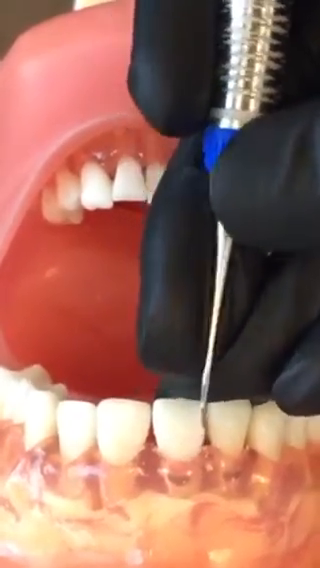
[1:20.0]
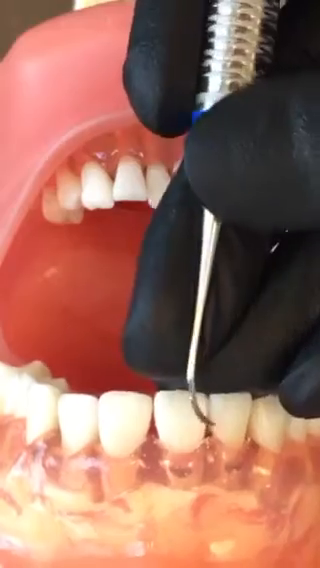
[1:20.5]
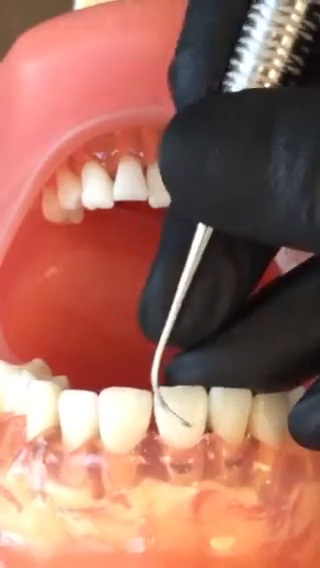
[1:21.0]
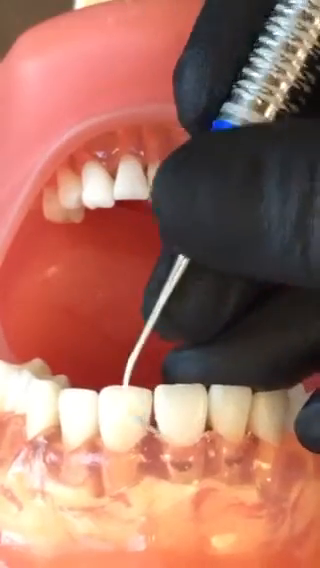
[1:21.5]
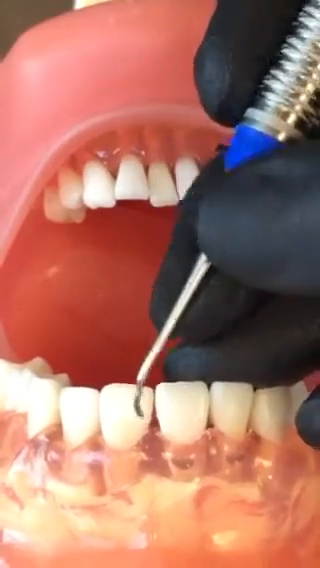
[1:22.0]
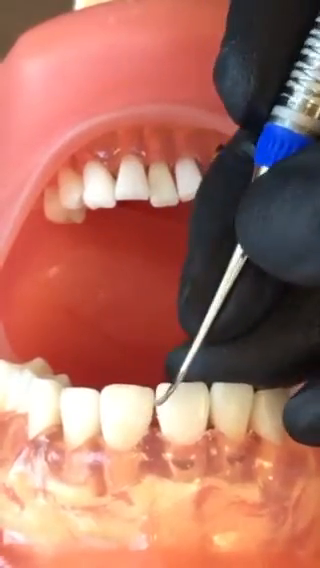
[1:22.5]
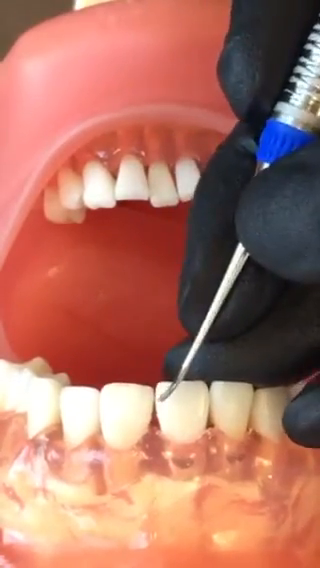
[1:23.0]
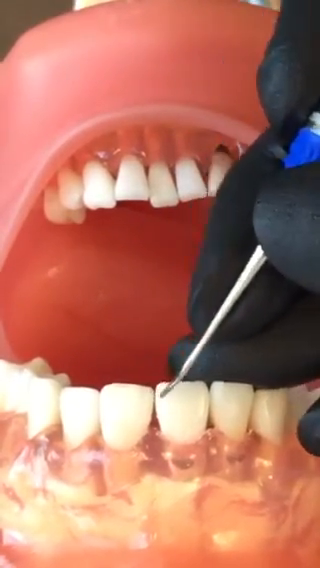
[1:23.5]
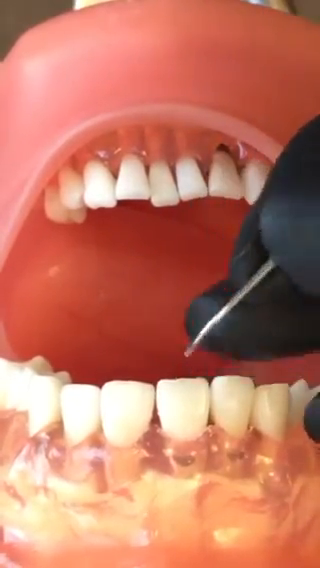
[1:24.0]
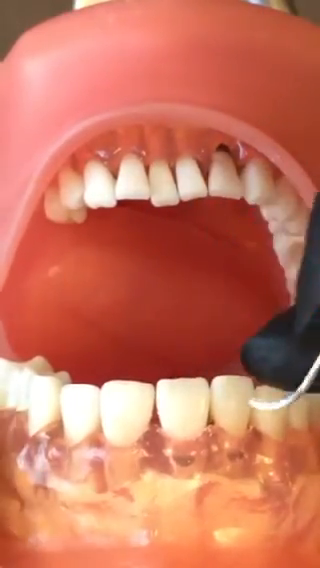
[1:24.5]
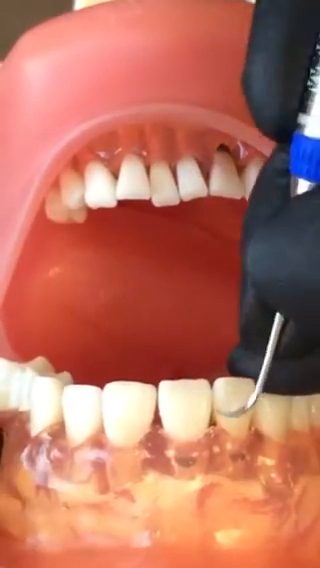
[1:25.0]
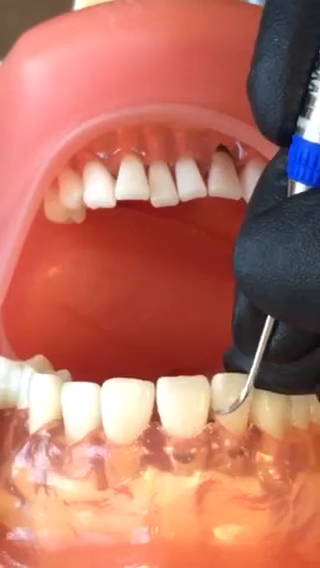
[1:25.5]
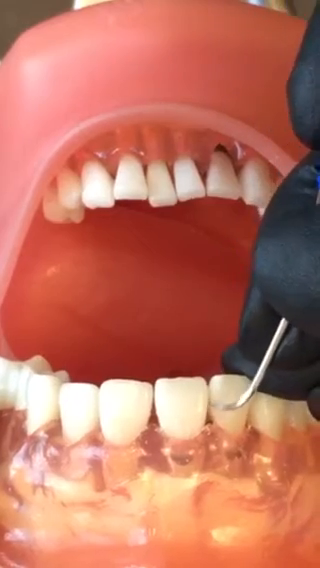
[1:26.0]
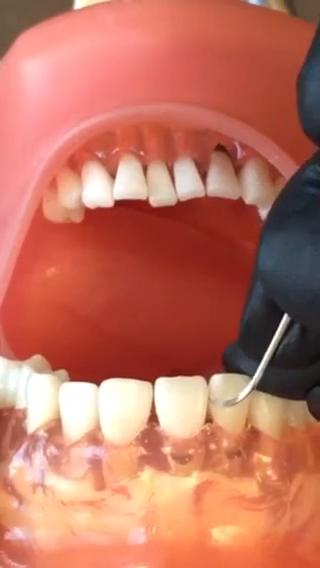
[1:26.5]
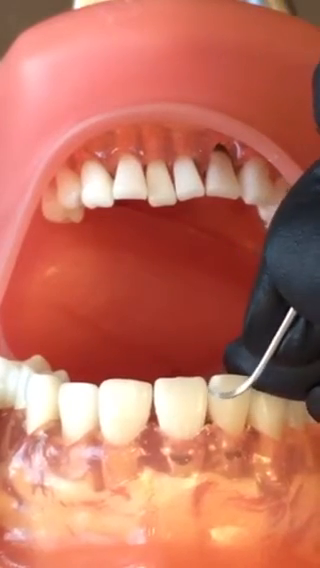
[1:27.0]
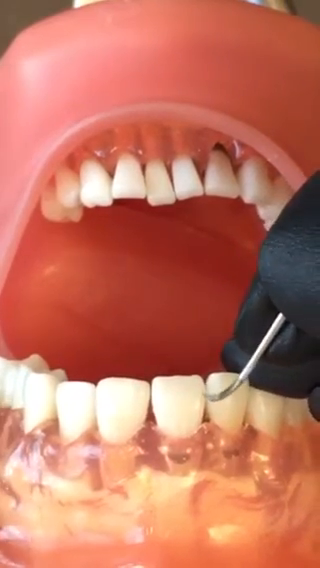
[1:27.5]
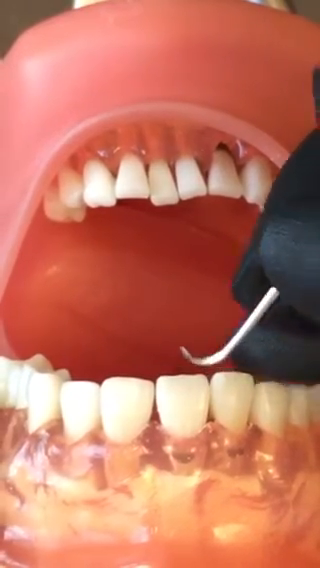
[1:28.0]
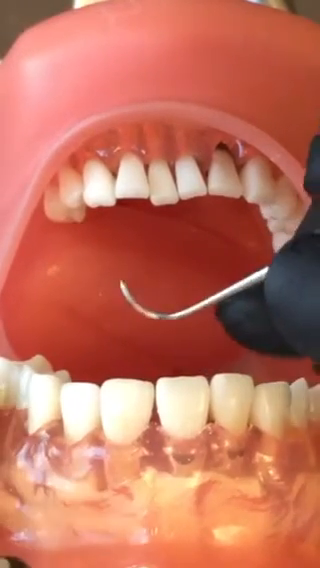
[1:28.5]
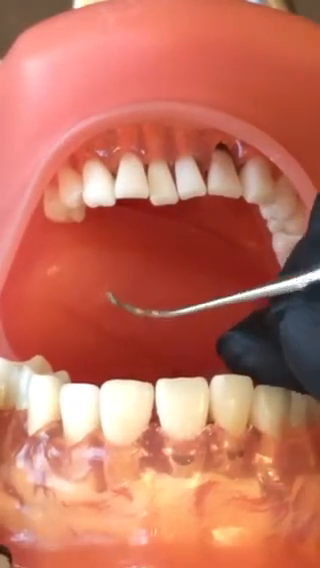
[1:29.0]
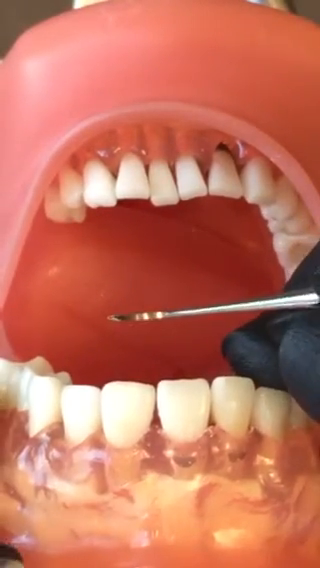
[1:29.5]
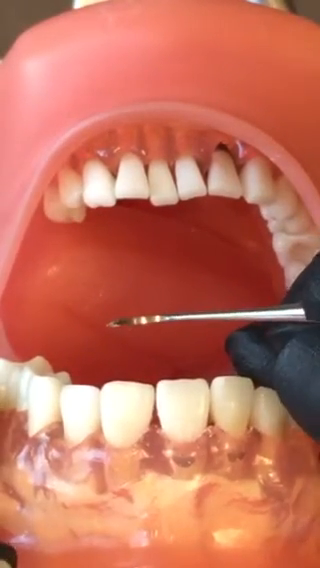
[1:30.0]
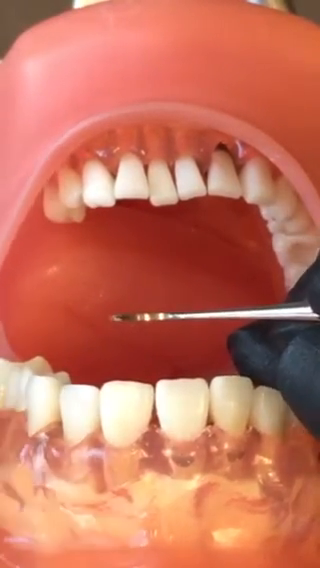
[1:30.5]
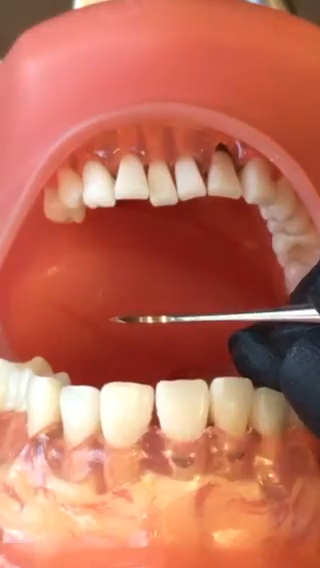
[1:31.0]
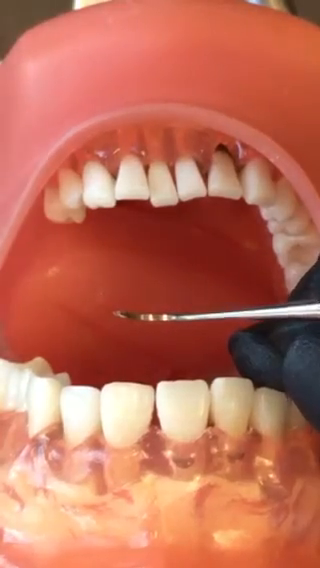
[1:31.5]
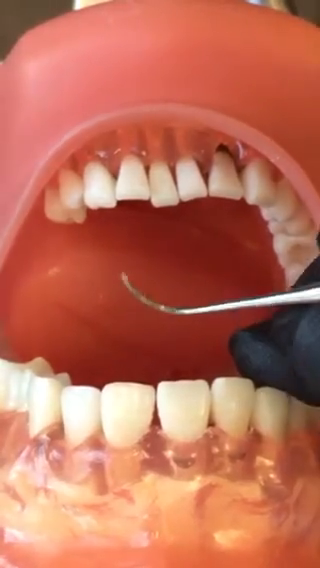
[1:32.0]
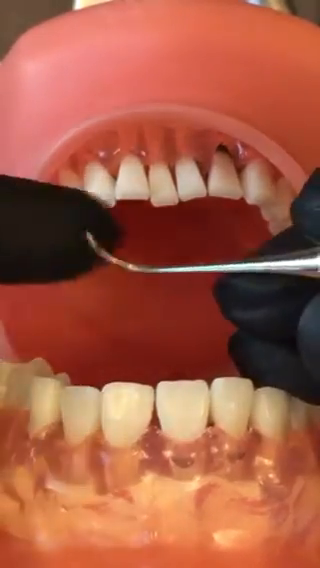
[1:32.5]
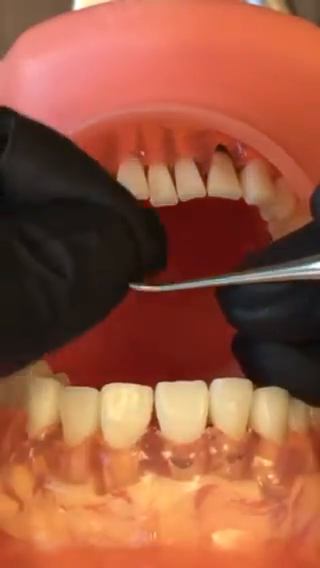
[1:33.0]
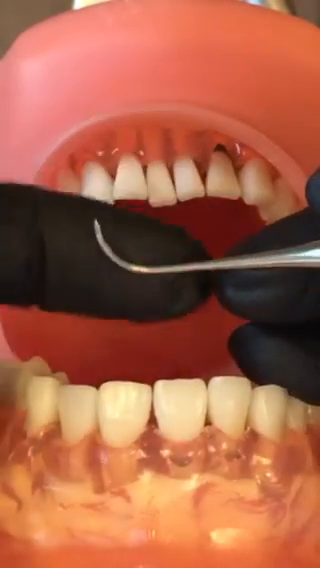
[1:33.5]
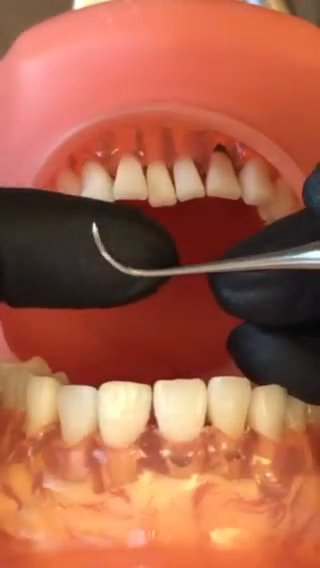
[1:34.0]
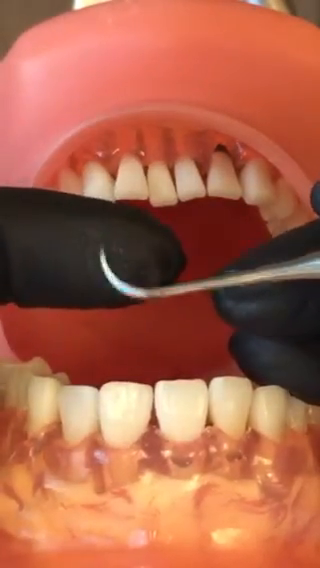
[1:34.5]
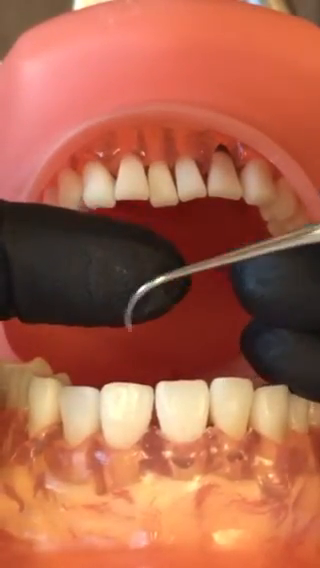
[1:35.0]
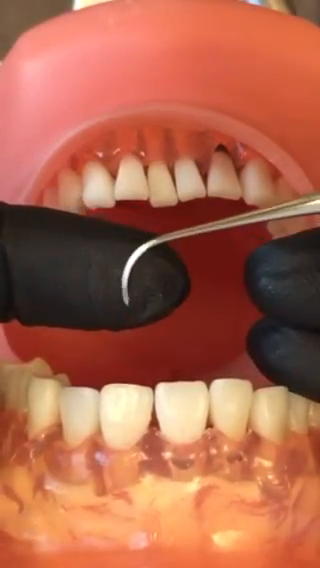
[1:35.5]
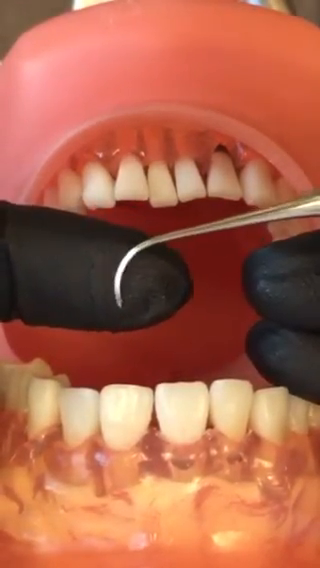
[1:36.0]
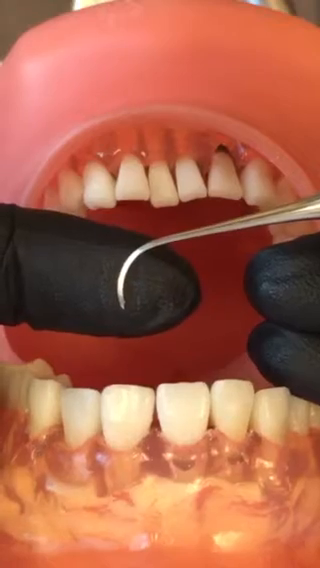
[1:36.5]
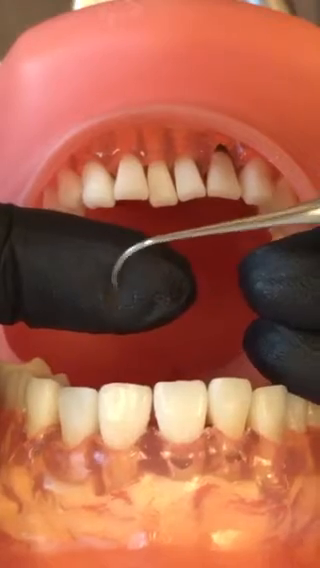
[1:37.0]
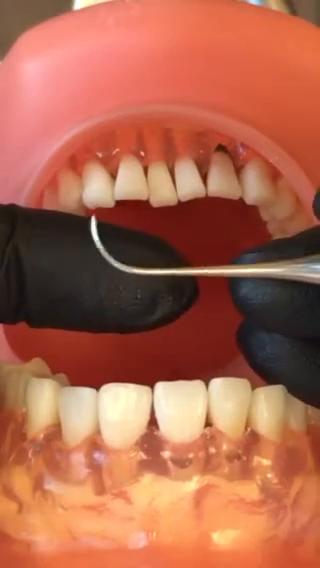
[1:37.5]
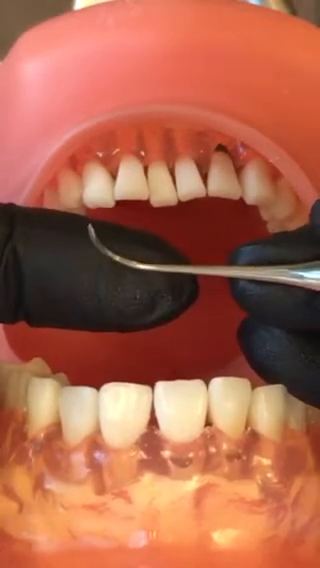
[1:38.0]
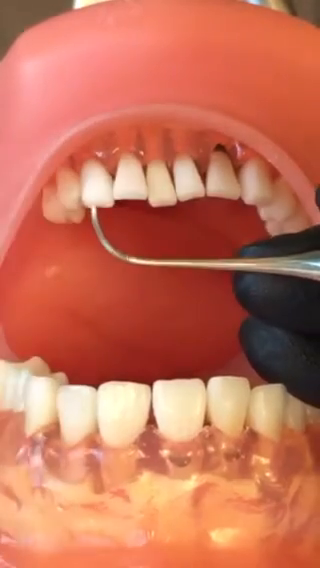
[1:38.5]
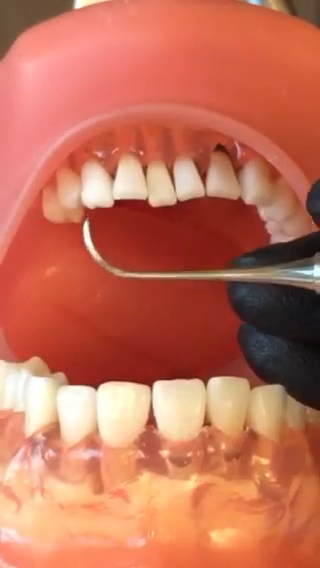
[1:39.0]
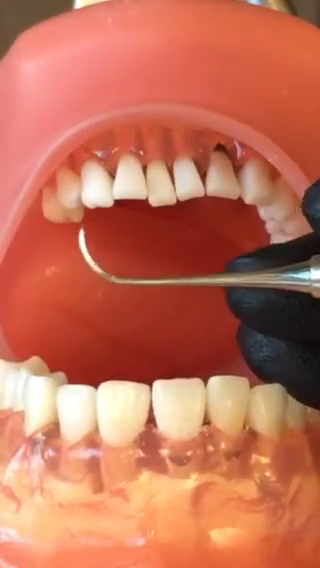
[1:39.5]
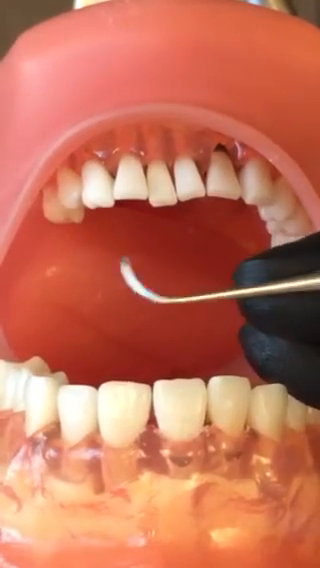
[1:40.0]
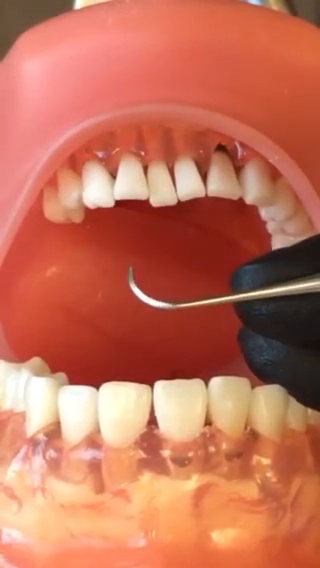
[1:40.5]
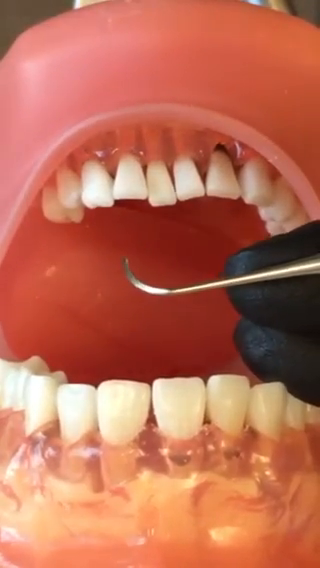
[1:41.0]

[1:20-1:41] The scraping tool is turned over and cleans the gap between the teeth. It is then turned over horizontally. With the other hand, the user cleans the tip of the hook and places a finger behind the hook, apparently to point something out about it. The tool is flipped over again so the hook points downward in a horizontal orientation, with the finger still behind the hook. The scraper is then turned over again; this time the hook is not pointing upward but is still horizontal. More of the scraper tool is visible, including the handle, which has ridges, and a blue cap at the top of the base.